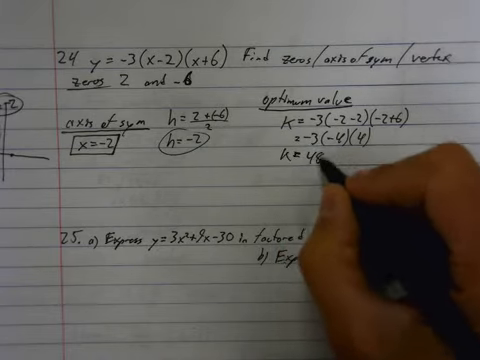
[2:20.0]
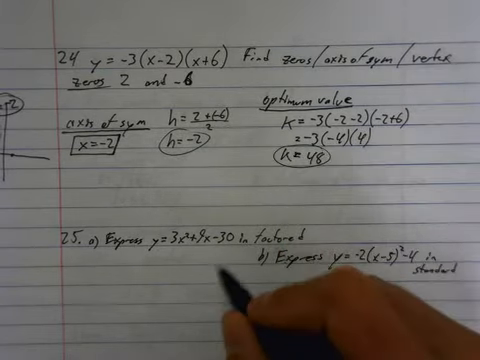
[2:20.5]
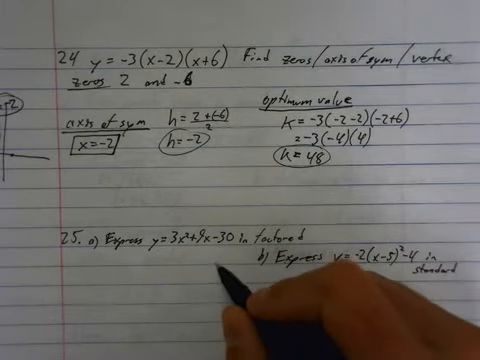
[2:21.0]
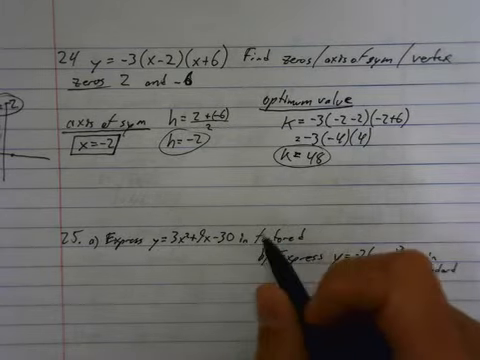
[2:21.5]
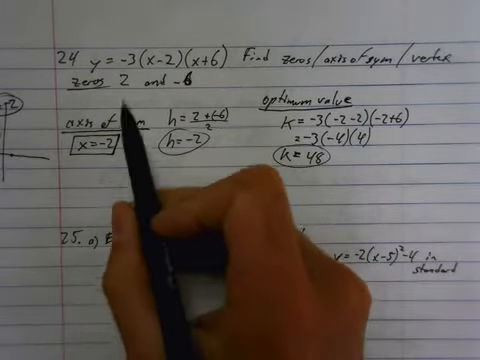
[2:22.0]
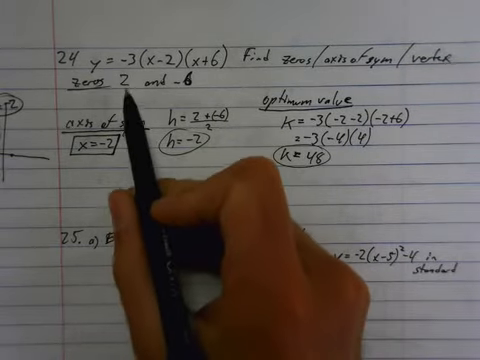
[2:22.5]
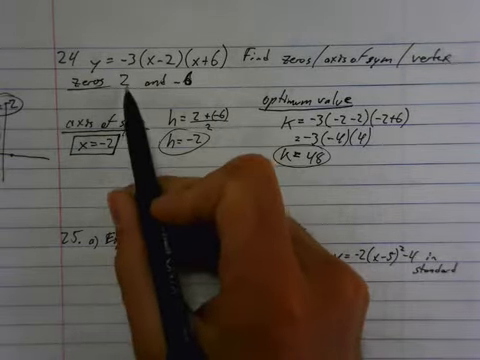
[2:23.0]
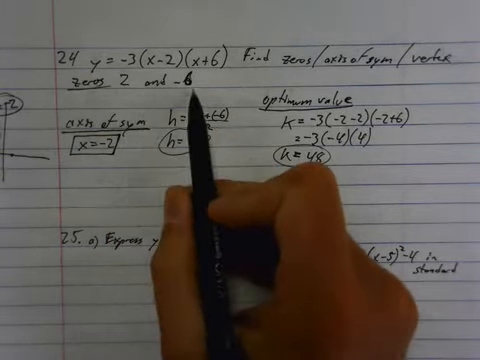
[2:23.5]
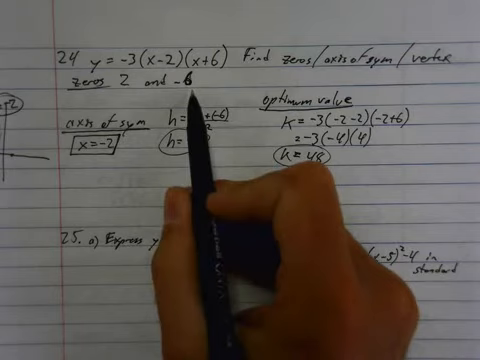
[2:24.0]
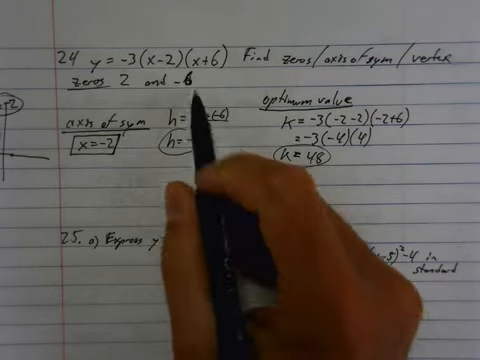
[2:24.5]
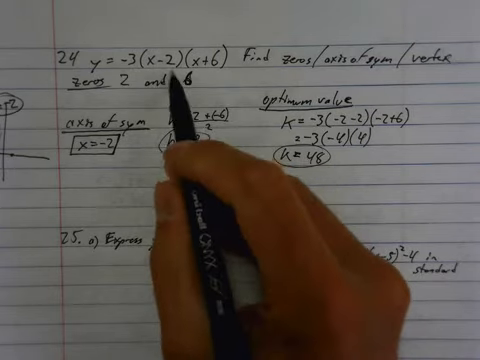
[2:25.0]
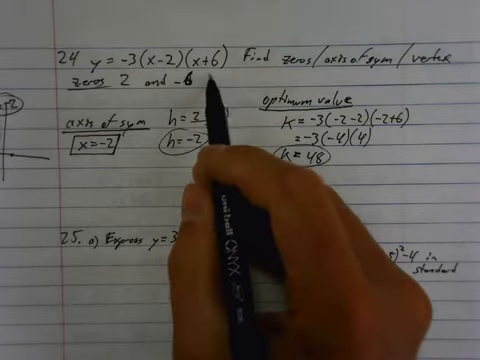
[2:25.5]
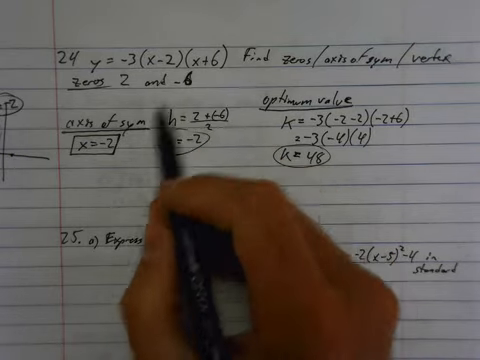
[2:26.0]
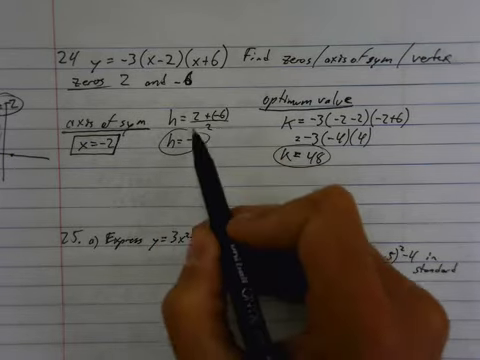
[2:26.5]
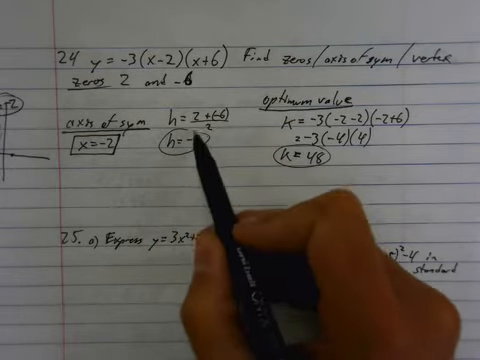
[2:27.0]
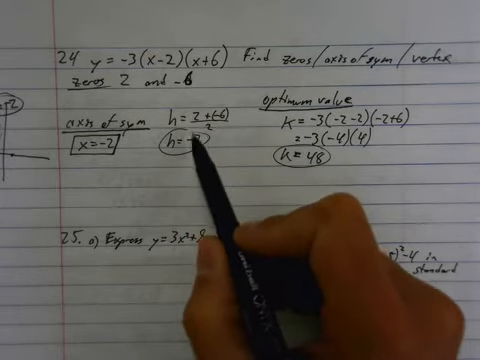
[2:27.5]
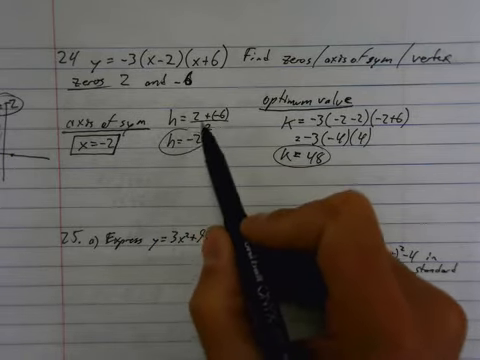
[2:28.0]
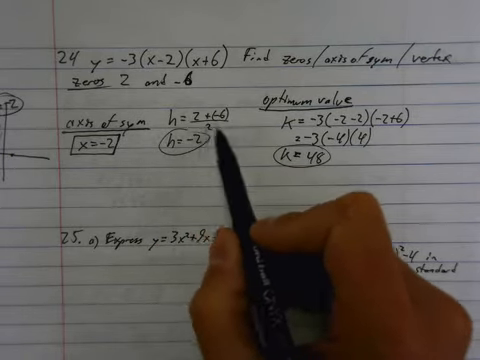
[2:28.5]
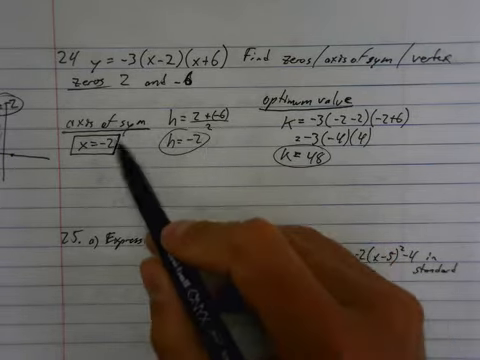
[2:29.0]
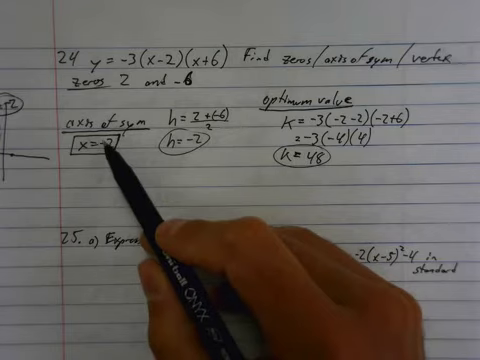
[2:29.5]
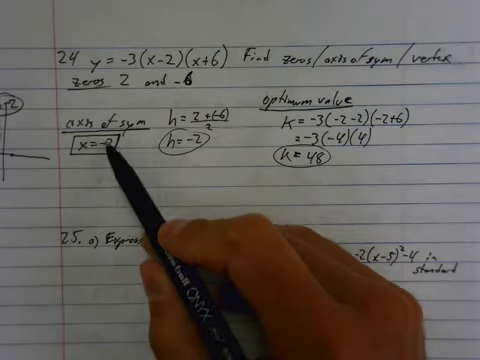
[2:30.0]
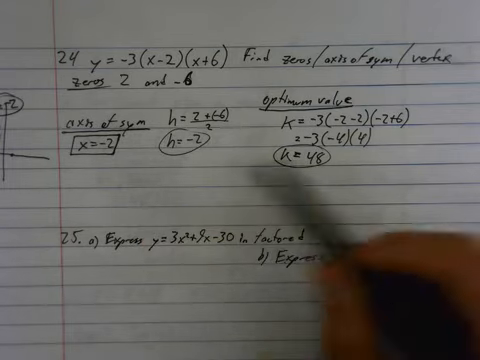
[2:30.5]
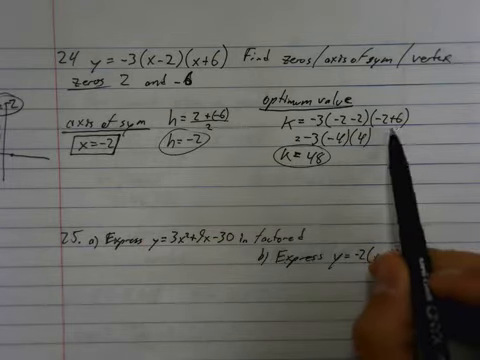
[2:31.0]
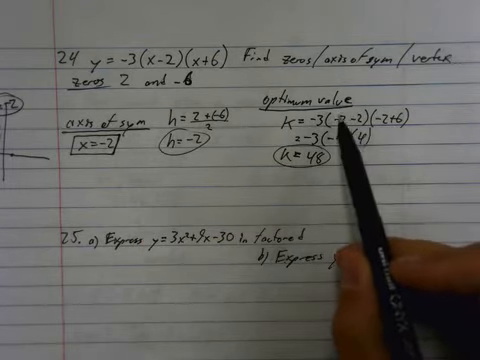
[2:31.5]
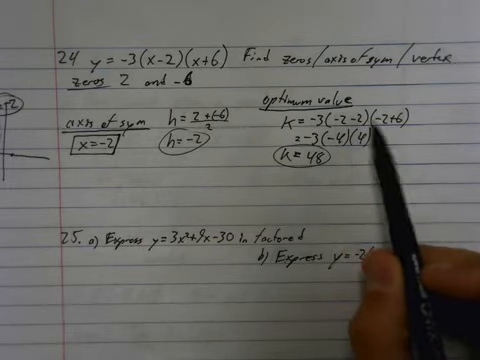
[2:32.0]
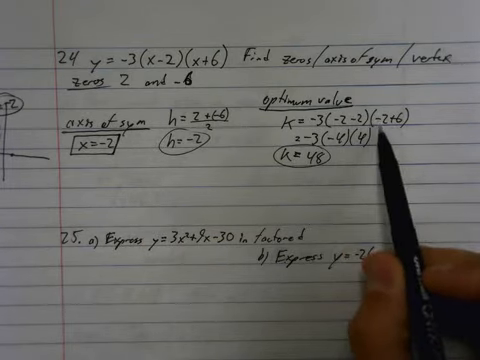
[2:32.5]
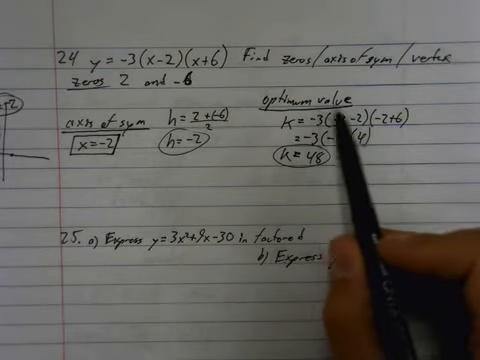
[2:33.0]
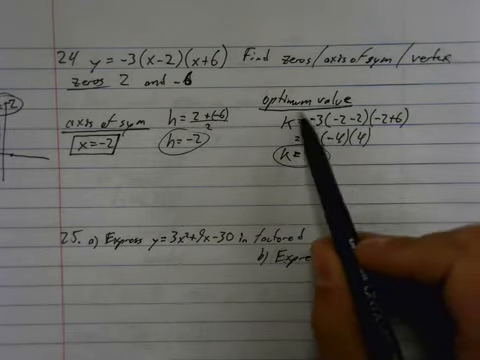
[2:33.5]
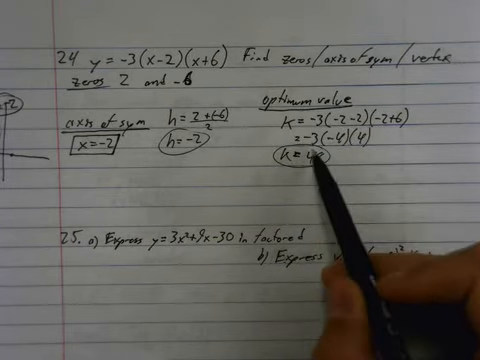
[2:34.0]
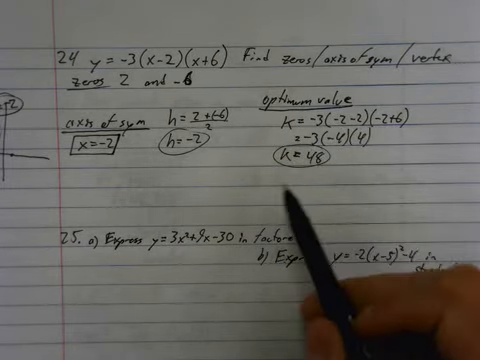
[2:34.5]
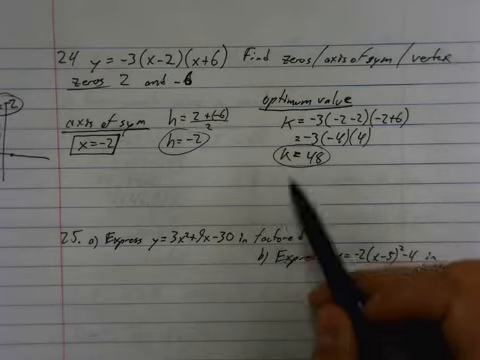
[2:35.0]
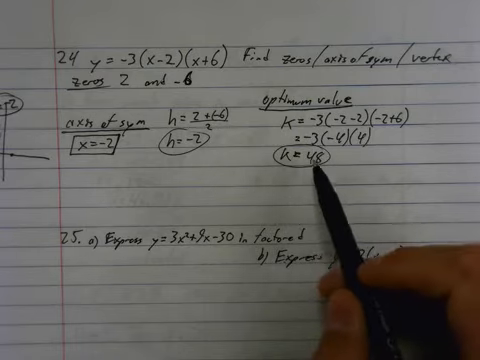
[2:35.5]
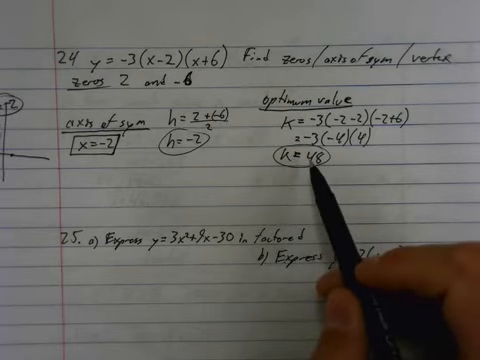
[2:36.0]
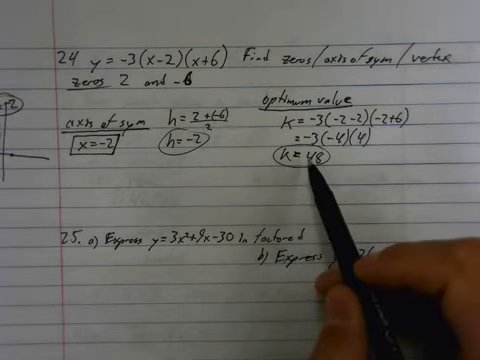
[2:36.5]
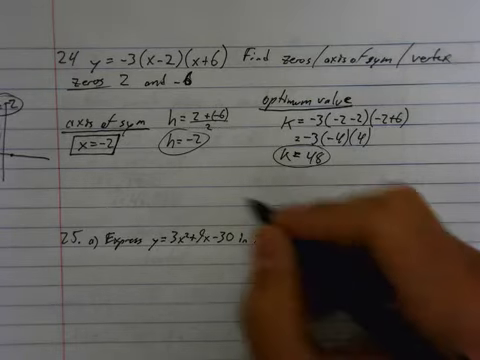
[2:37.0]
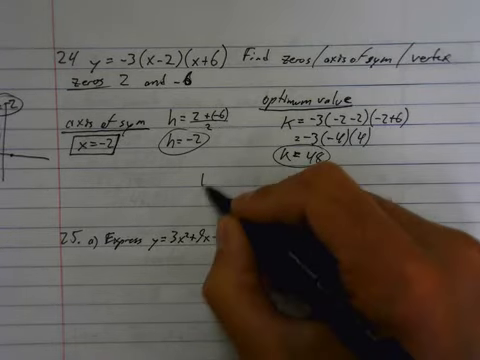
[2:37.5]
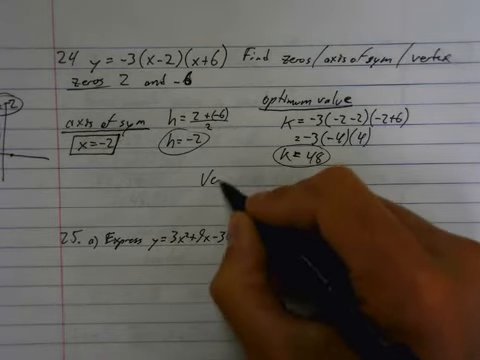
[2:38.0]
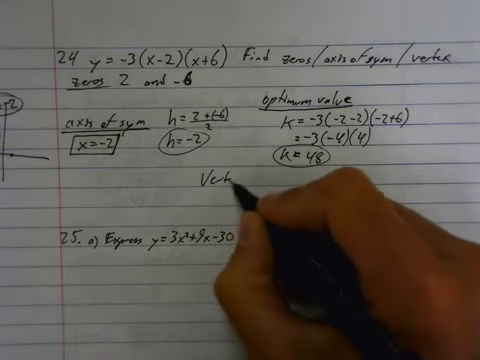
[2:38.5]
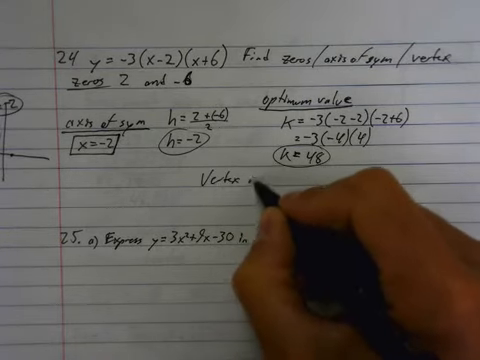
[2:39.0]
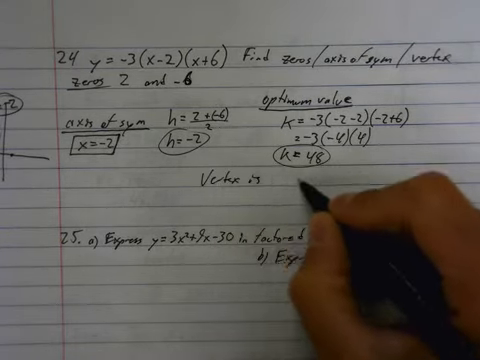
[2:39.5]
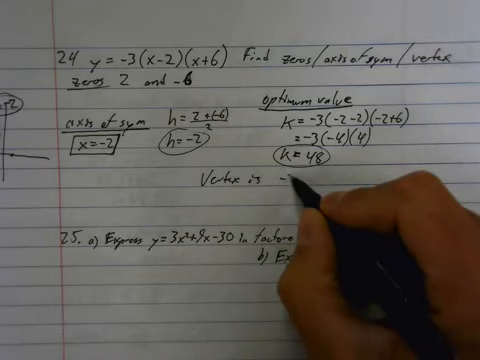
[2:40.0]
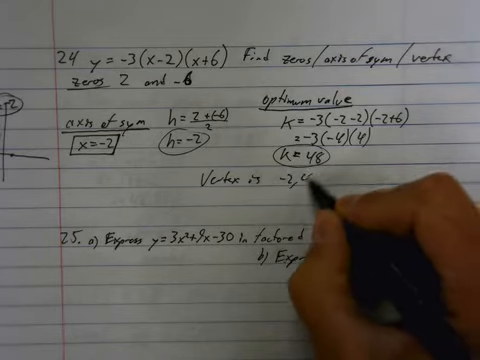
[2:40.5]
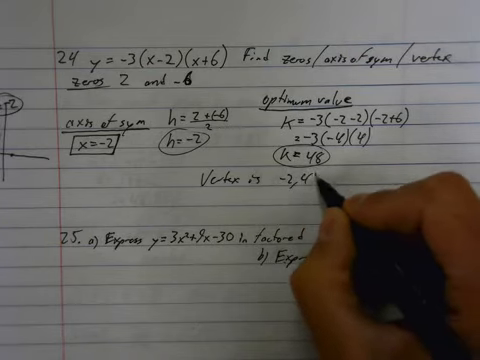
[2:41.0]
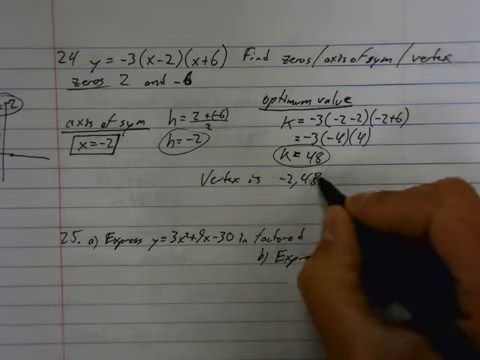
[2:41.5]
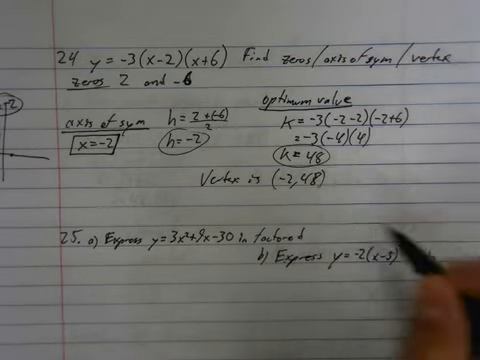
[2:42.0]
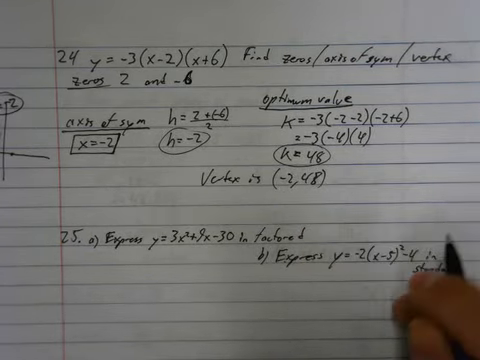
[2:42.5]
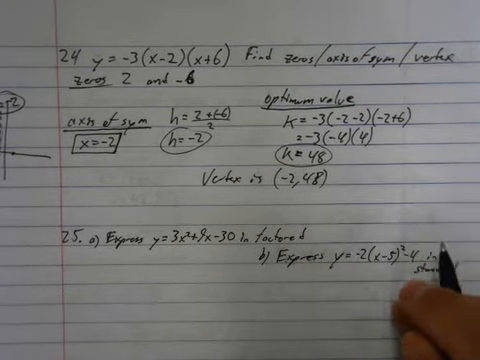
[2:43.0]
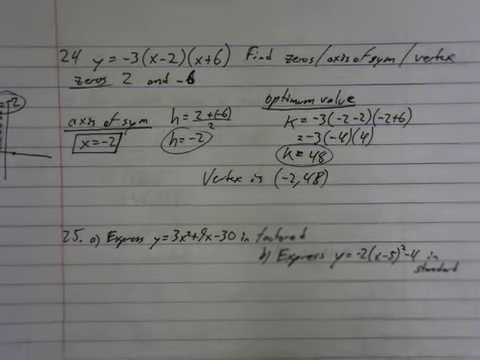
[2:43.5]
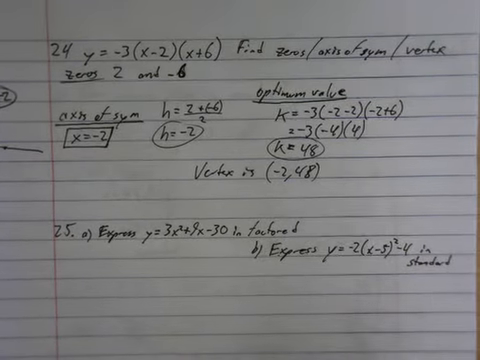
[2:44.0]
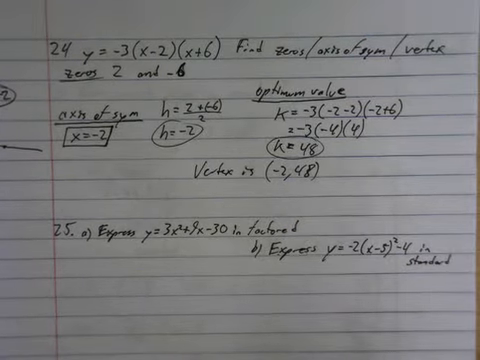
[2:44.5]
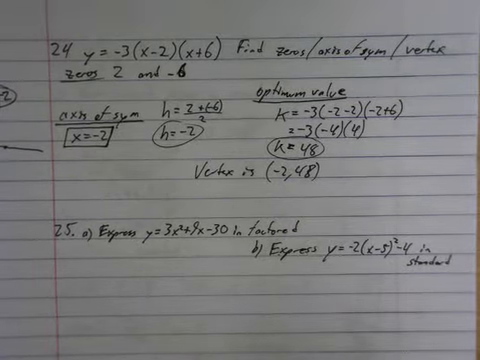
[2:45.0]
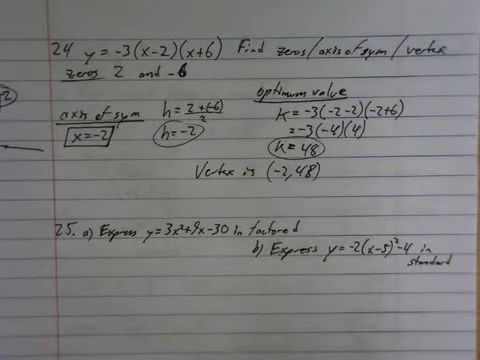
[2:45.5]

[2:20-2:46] The person continues with the optimum value section of the paper, which is covered in equations and mathematical work in black ink from a black pen. They point at different sections of the equations, around the circled k = 48, and below that write "vertex (-2, 48)", apparently having solved the problem using the axis of symmetry, h = -2 and x = -2. The writing is neat and legible.